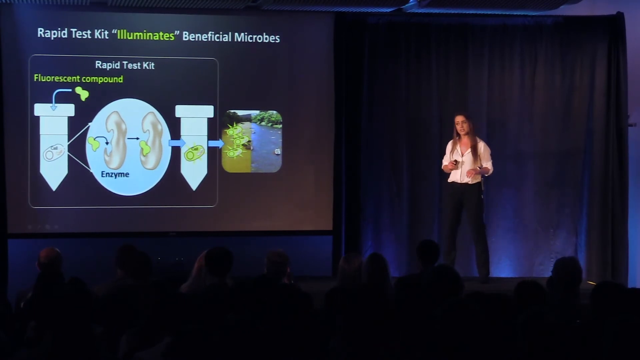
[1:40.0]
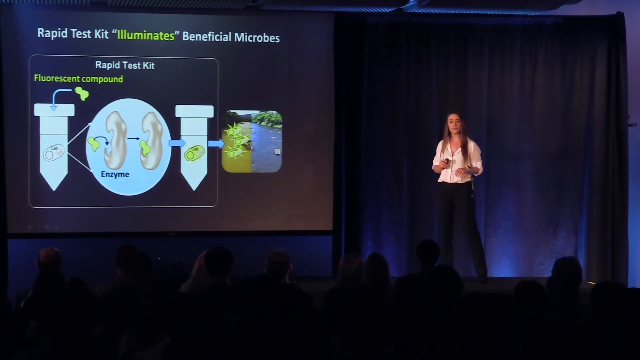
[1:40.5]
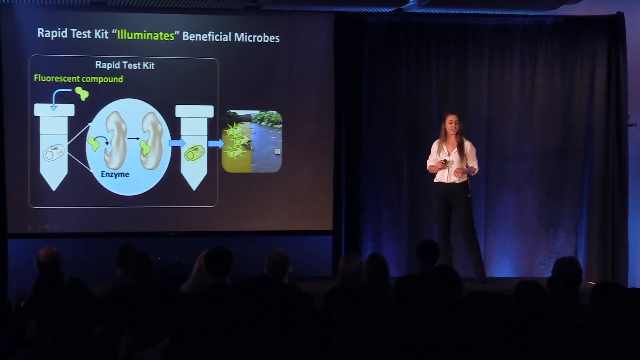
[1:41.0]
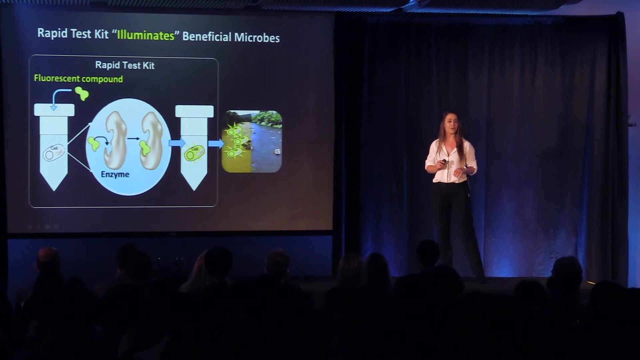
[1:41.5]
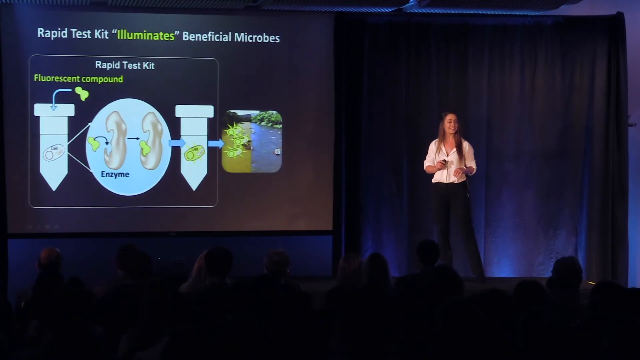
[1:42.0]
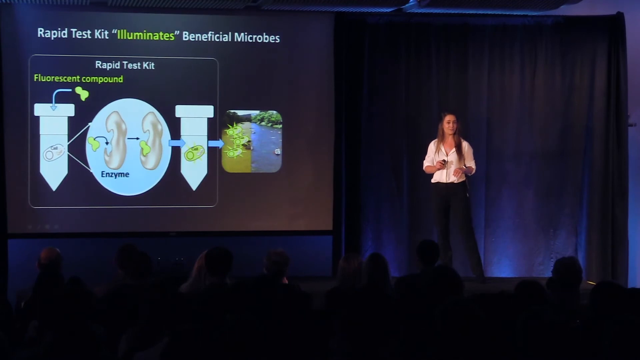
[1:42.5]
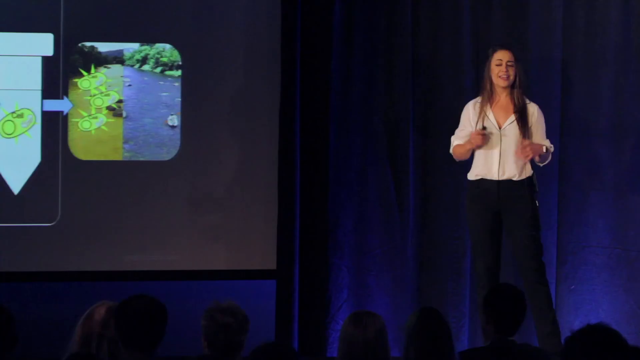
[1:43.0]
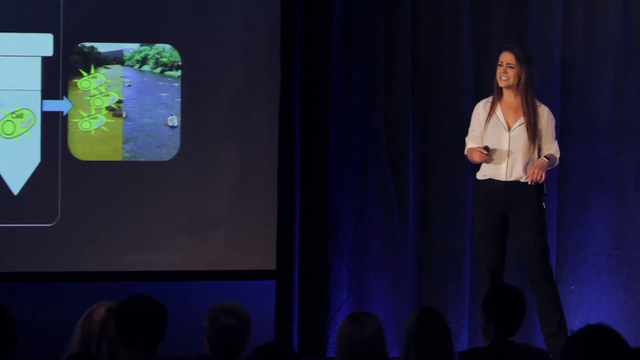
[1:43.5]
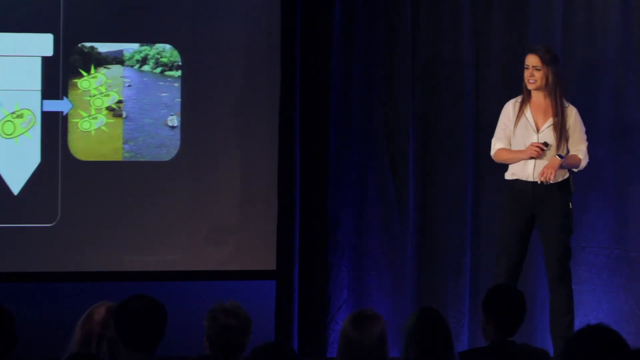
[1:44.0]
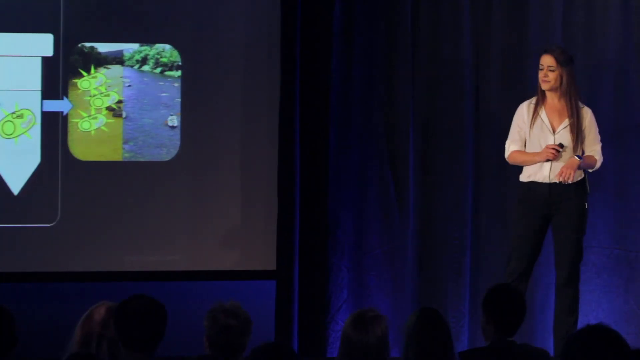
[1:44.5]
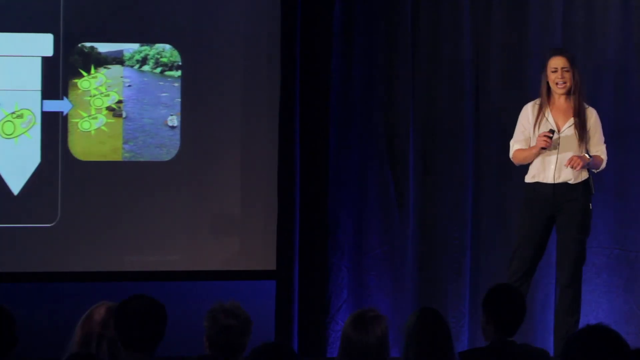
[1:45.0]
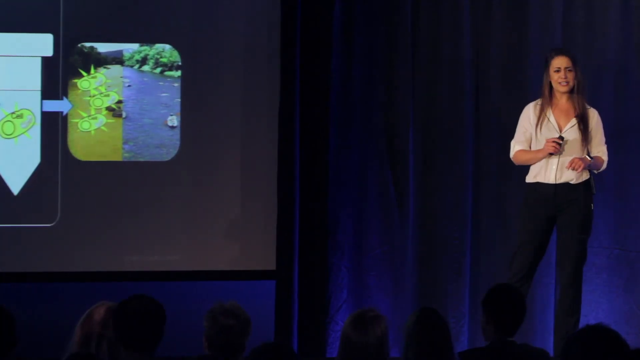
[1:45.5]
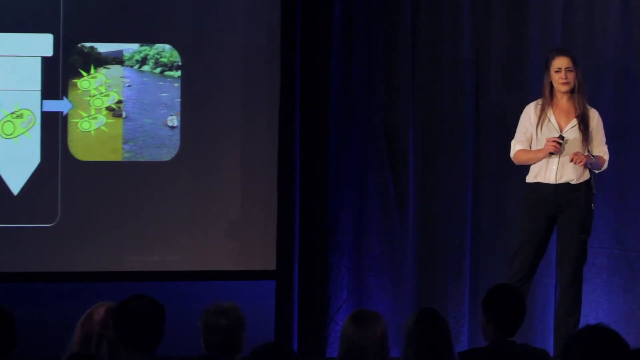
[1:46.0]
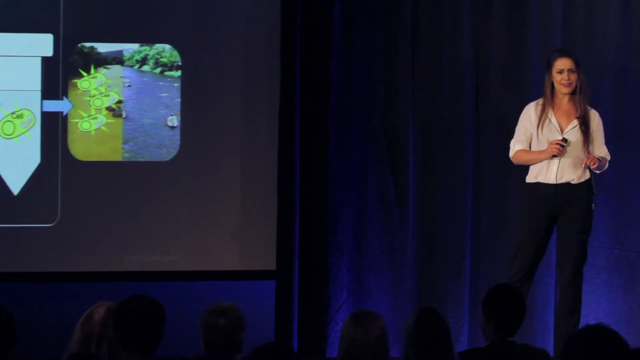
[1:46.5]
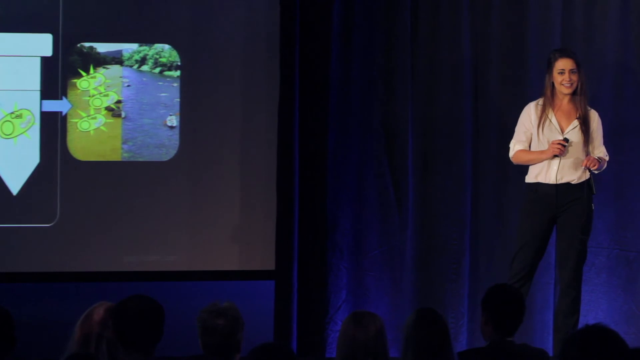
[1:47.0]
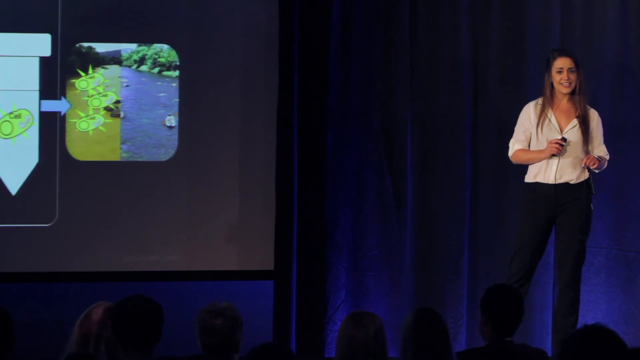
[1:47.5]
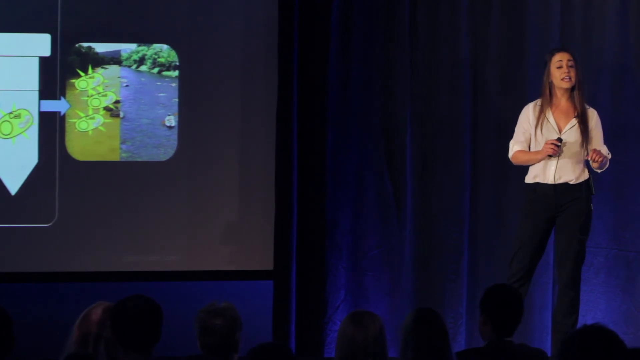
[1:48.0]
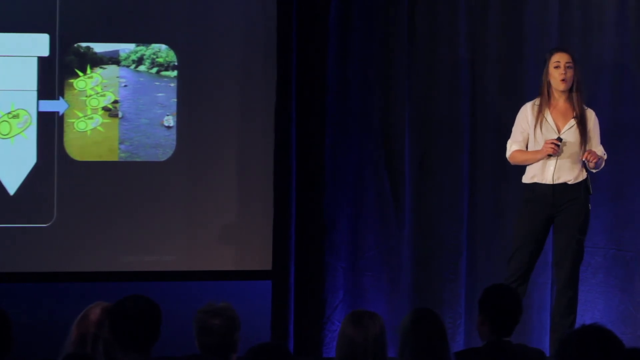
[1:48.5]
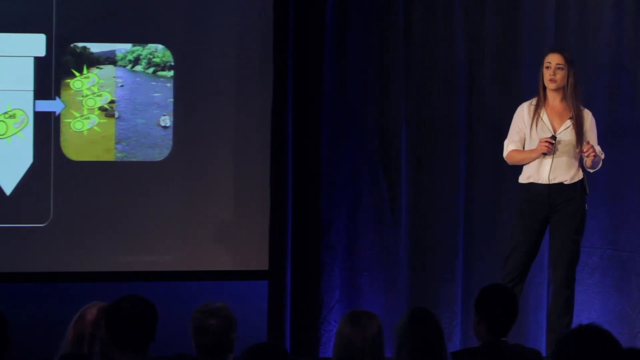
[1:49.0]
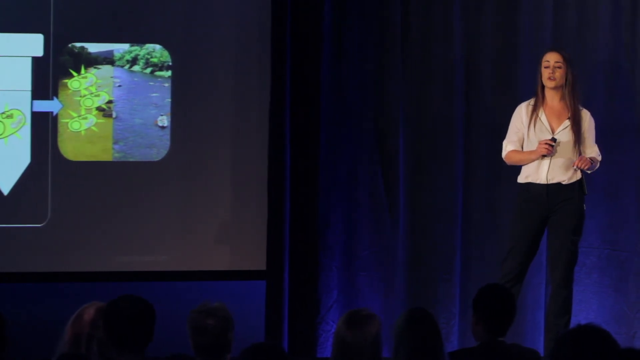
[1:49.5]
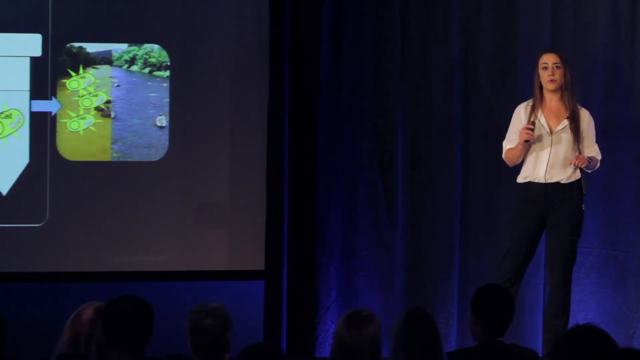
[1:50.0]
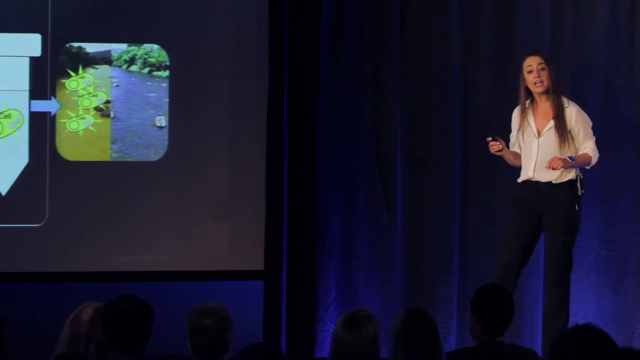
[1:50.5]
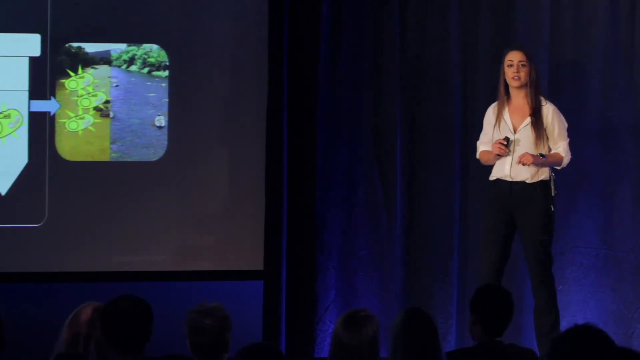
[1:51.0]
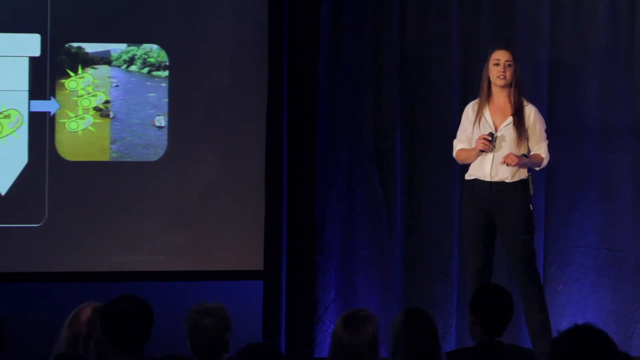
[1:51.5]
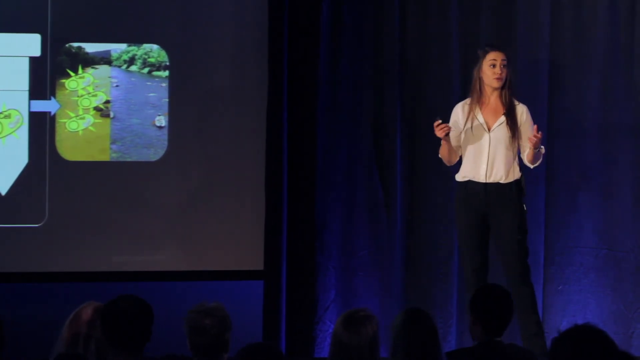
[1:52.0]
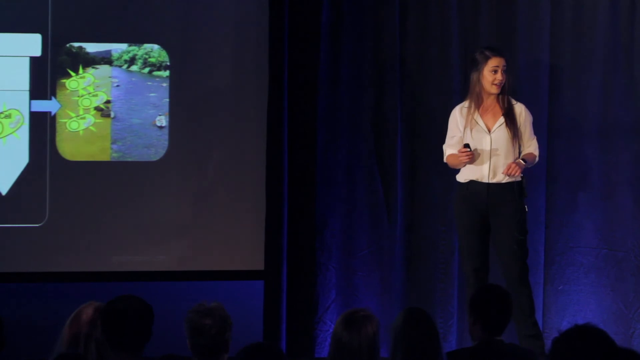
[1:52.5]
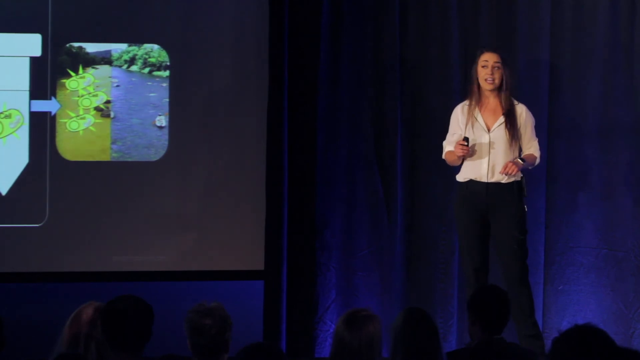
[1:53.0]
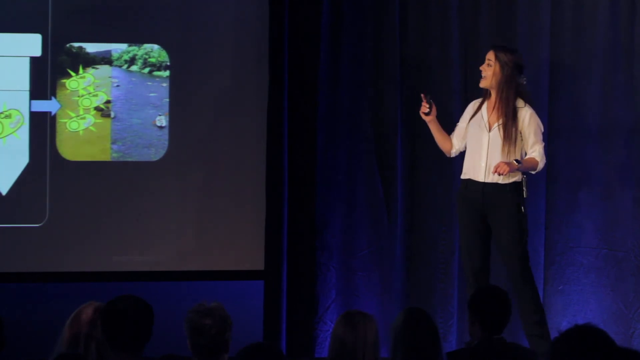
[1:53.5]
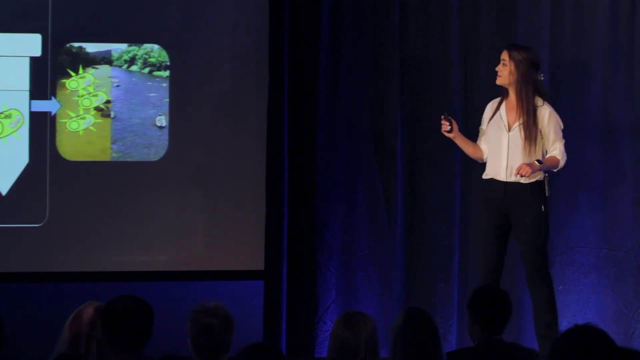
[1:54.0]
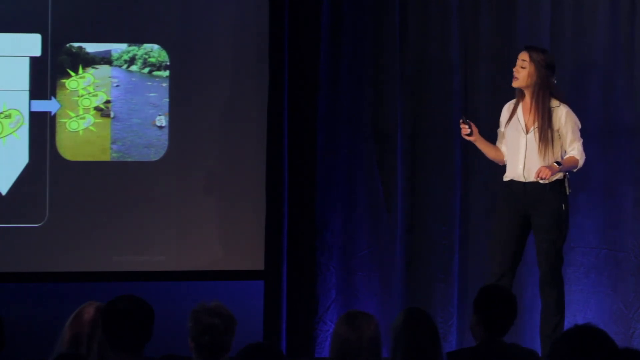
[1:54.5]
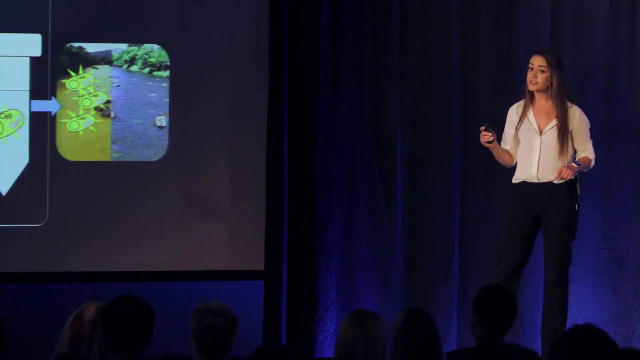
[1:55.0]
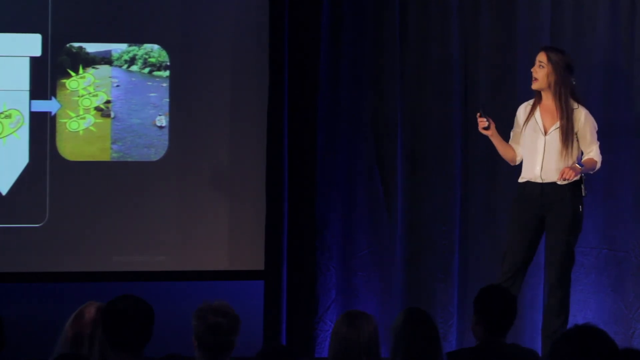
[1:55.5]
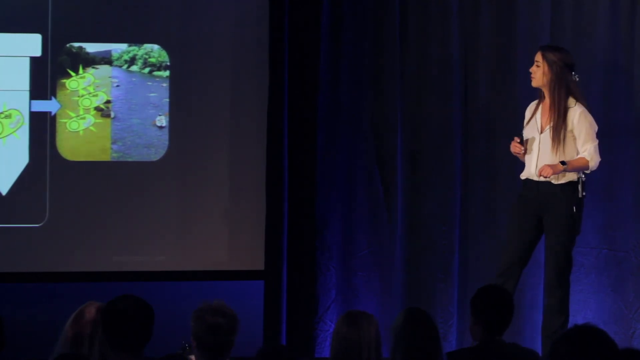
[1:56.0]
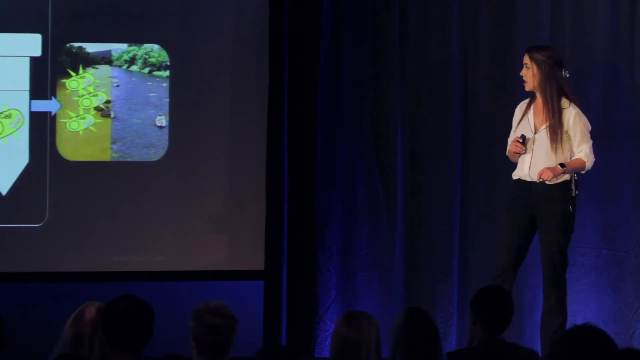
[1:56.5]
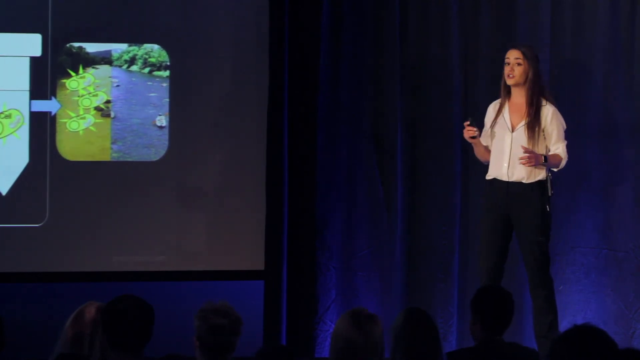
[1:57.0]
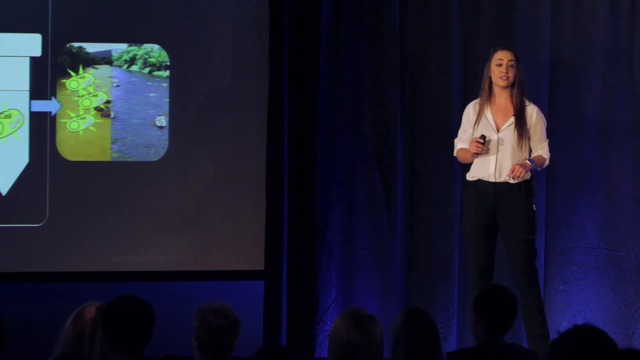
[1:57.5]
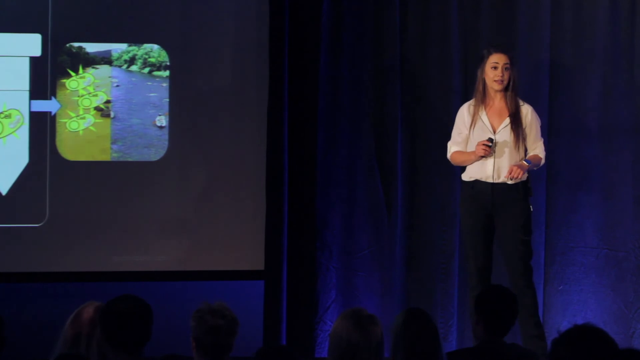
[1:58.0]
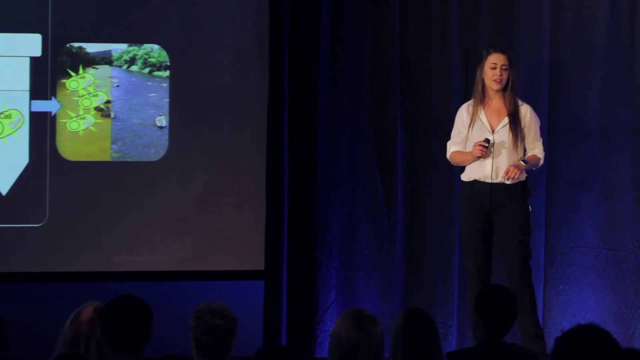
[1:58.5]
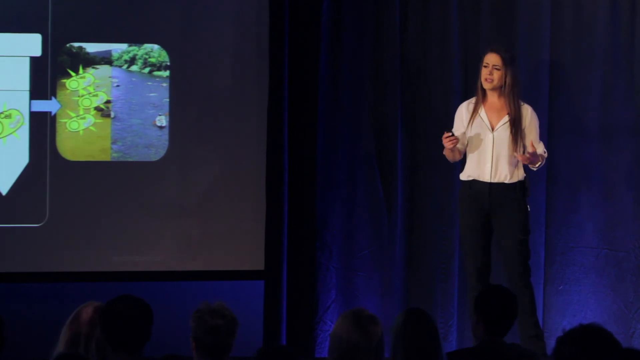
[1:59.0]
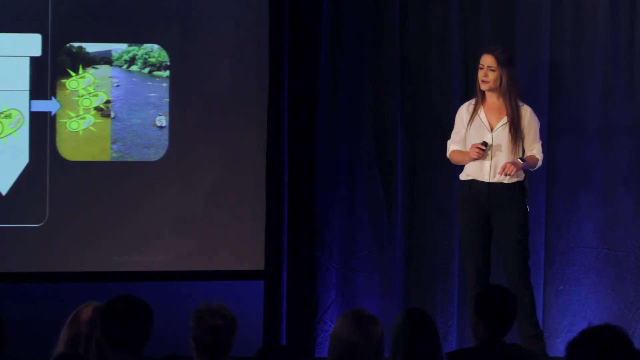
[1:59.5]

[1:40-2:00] In what appears to be a TED Talk-type situation, a woman on the right side wears a white dress shirt and black slacks, with what looks like a smartwatch, and holds a clicker that controls the projection screen in one hand. The projection screen is toward the left, the audience is in the foreground, and a blue background is visible behind the woman. The screen shows graphics and text in a mix of white and yellow: "rapid test kit illuminates beneficial microbes," then a white and yellow square box outline reading "rapid test kit fluorescent compound." In white are two test tube-looking shapes, and between them is a light blue circle with gold and tan cartoon-looking enzymes, abstract blobby shapes. A series of black, white and blue arrows appears to show how these are interconnected, leading to what looks like a theoretical before-and-after picture: on the left, dirty, murky brown water with cartoon-looking gold cells in it; on the right, serene blue-looking water with somebody paddle boating in it and some trees. The view lingers on the graphic while the camera pushes in on the woman as she speaks. She keeps making small hand movements, moving the clicker away from herself and back in, and alternates her gaze between the projection screen and the audience. Toward the end she focuses her attention on the projection screen.